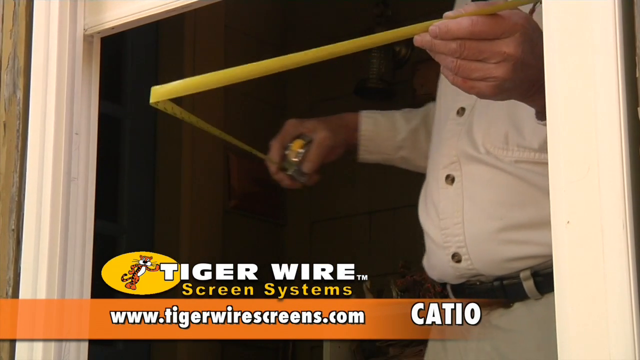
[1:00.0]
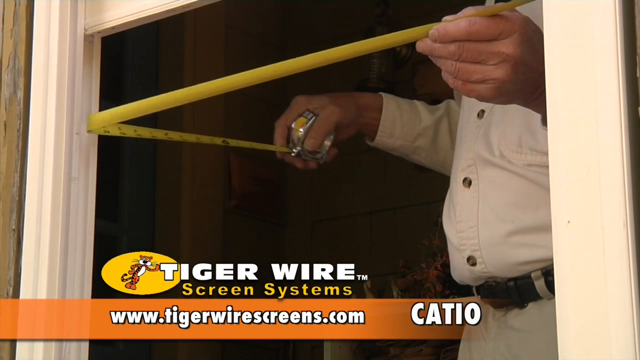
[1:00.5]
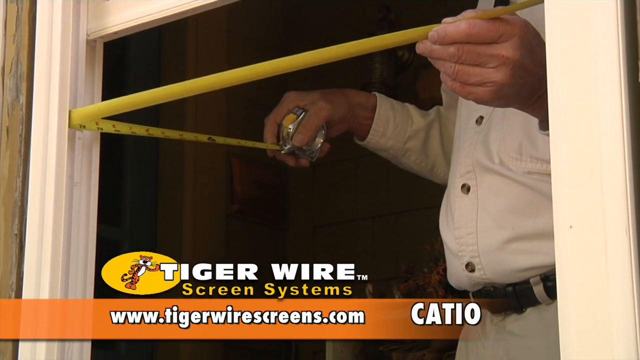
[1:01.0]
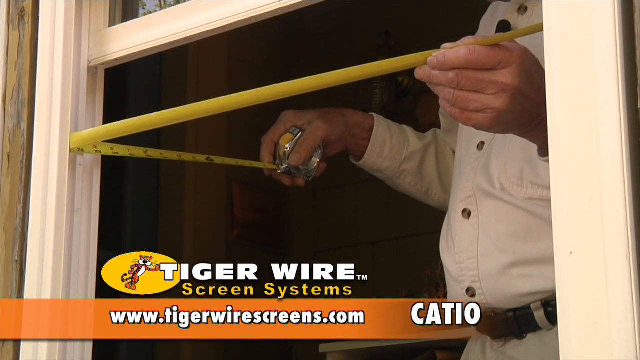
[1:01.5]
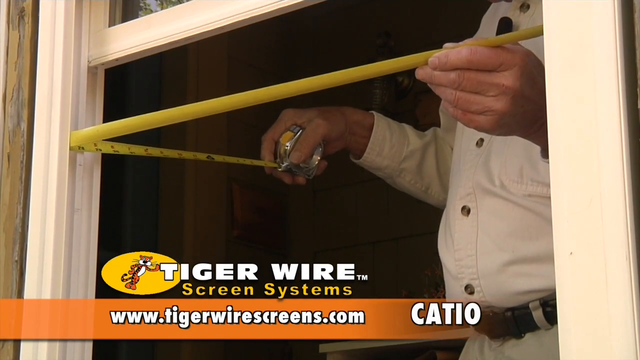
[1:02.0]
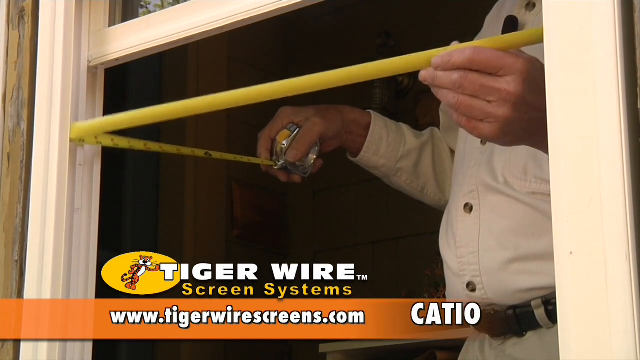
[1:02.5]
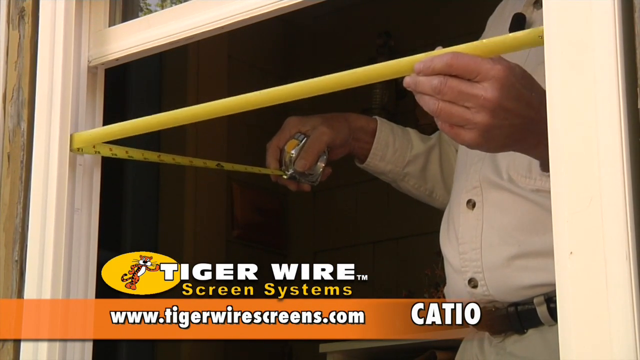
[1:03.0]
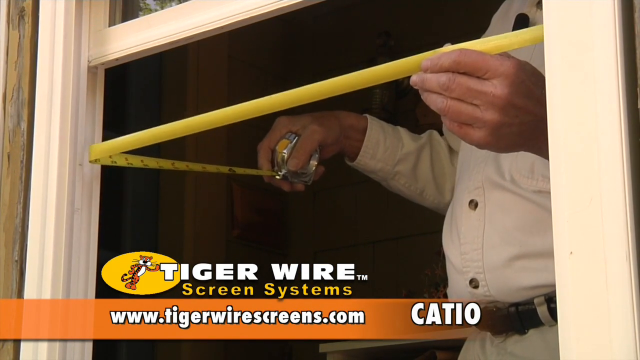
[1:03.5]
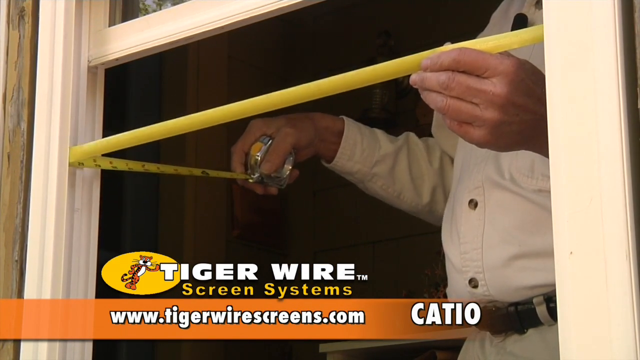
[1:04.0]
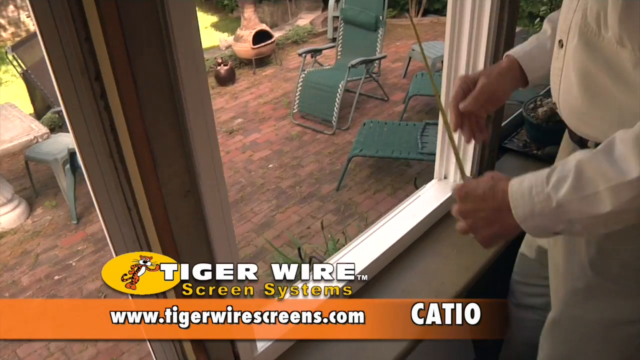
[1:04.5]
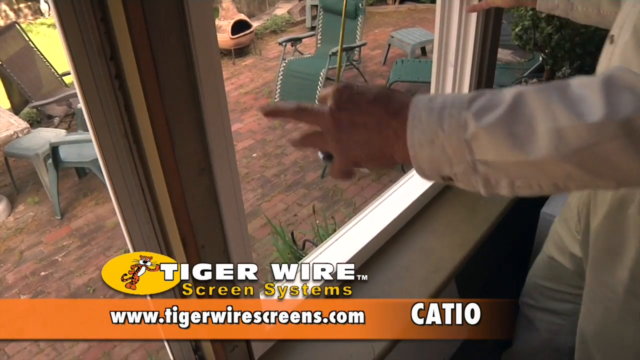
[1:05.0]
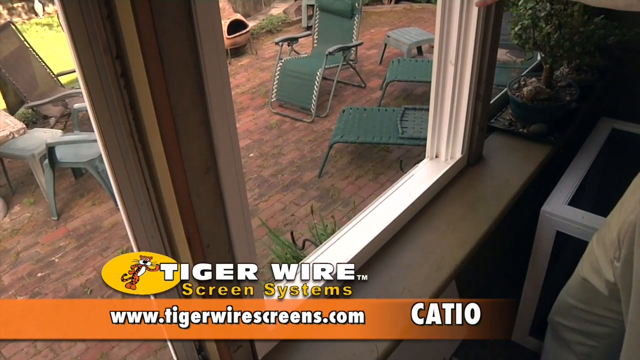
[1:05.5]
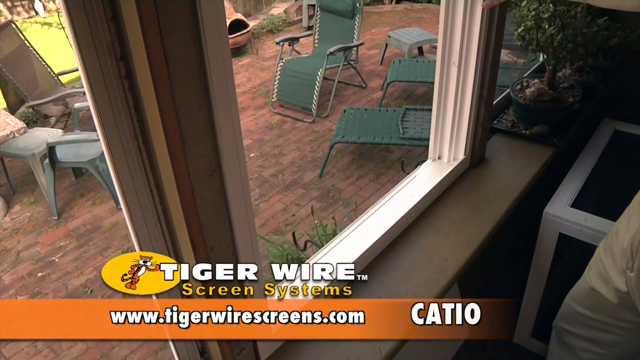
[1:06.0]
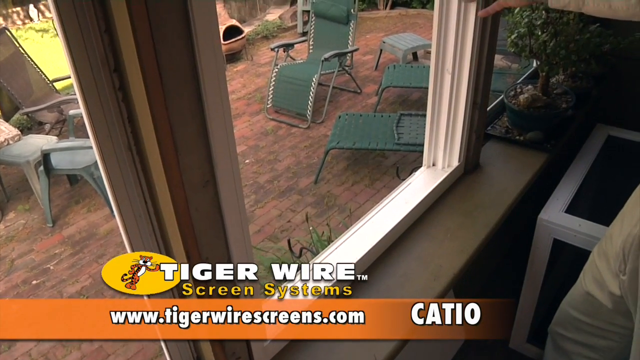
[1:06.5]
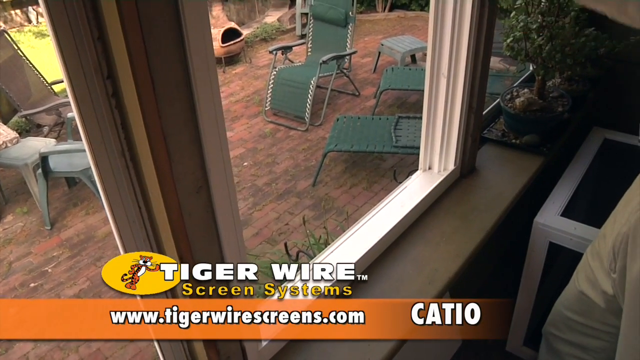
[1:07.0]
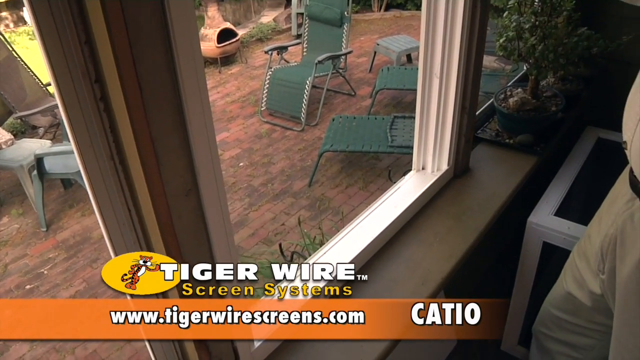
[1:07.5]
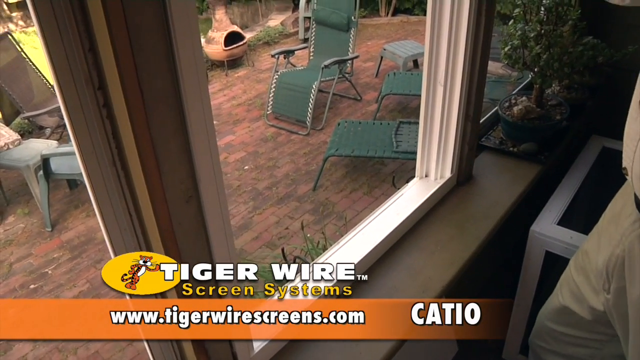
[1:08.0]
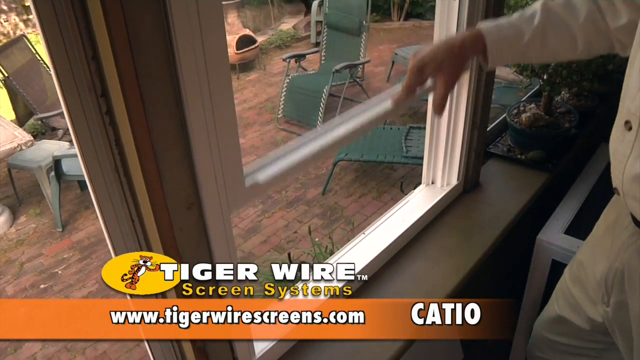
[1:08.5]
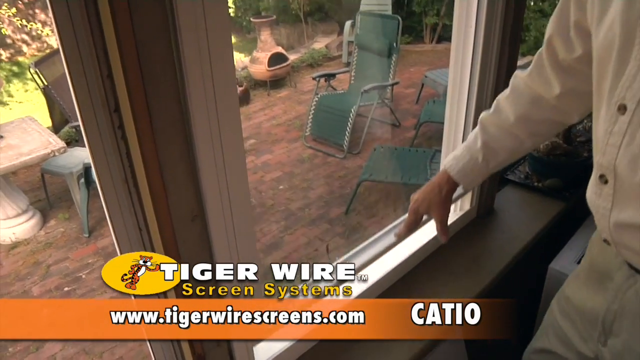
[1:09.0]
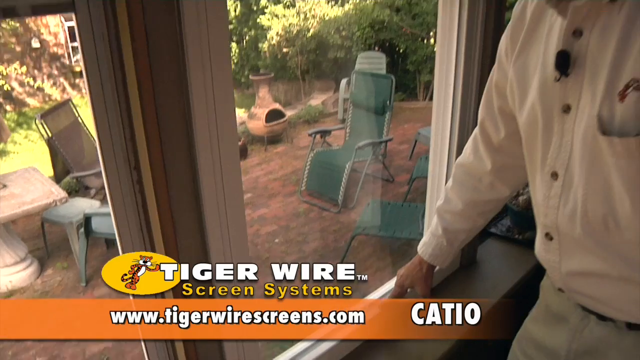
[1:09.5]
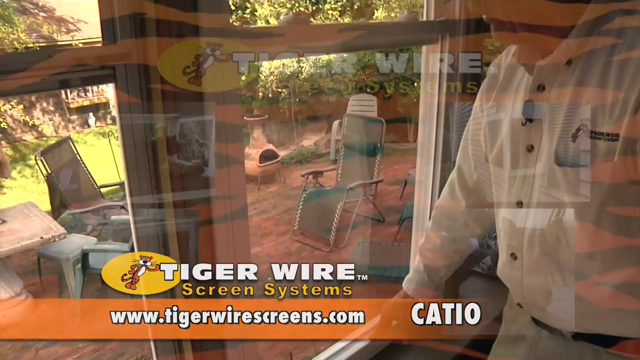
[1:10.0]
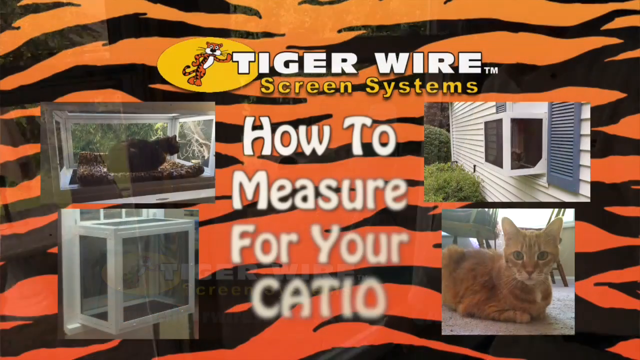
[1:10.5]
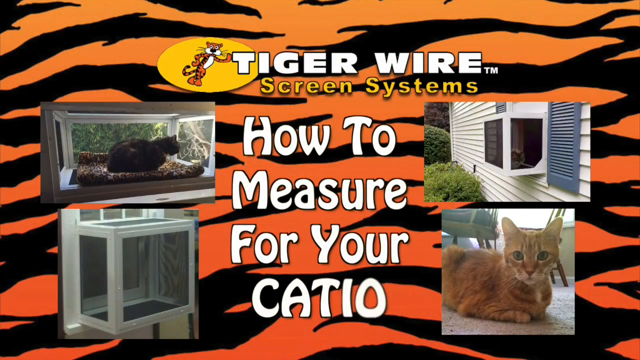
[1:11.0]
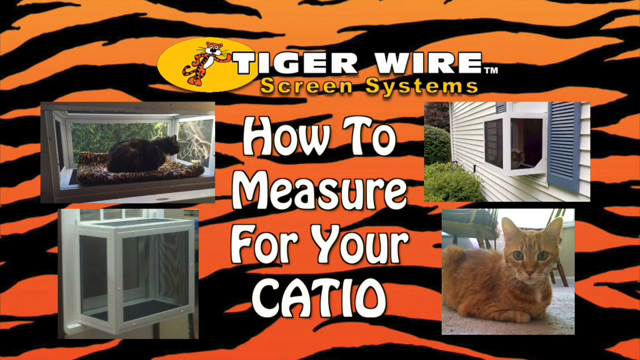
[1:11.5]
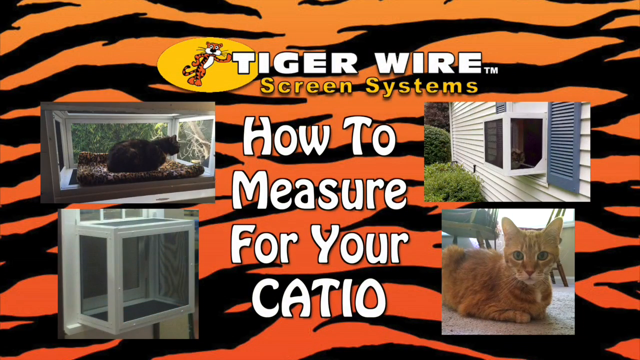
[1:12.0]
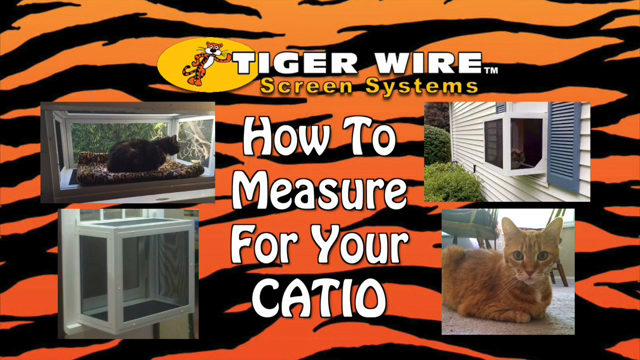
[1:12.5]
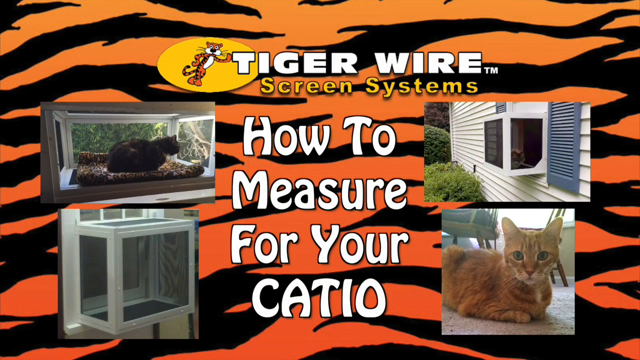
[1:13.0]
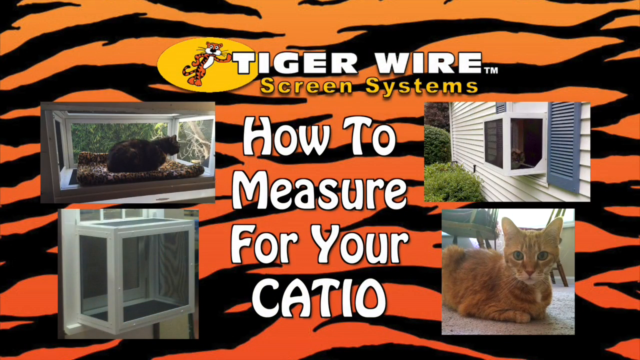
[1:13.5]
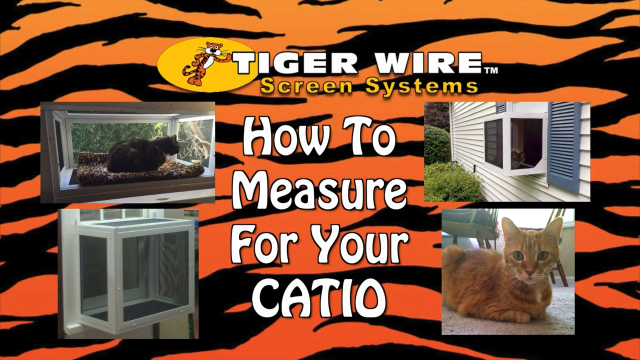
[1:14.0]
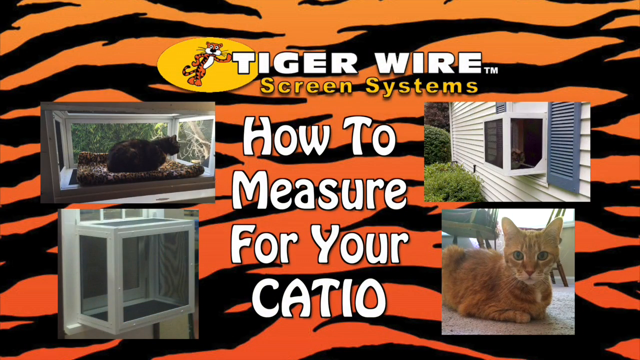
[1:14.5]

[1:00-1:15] The man uses a yellow tape measure to measure horizontally between the window frames, with one end on one side of the frame and the tape stretched out to the other side. As the video ends, a promotional screen appears with a background that looks like tiger stripes and text on top reading "Tiger Wire screen systems how to measure your catio." On either side of the screen are images of cats inside the catio and of the catio itself, and in the lower right corner is an image of an orange cat looking at the camera.